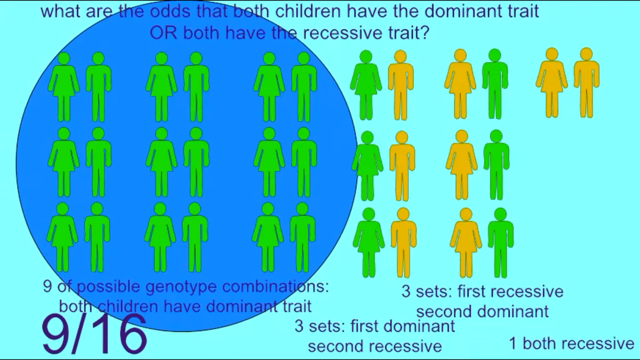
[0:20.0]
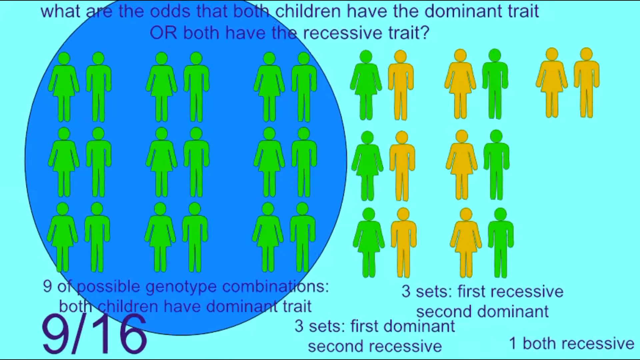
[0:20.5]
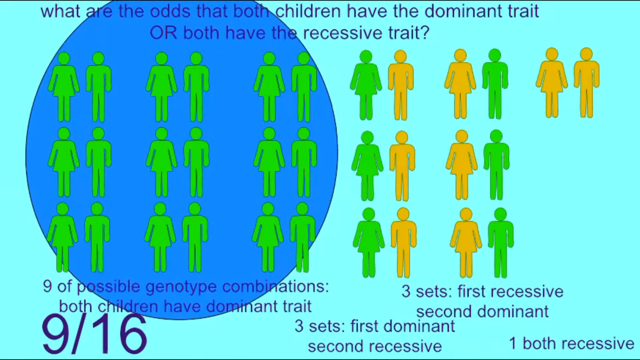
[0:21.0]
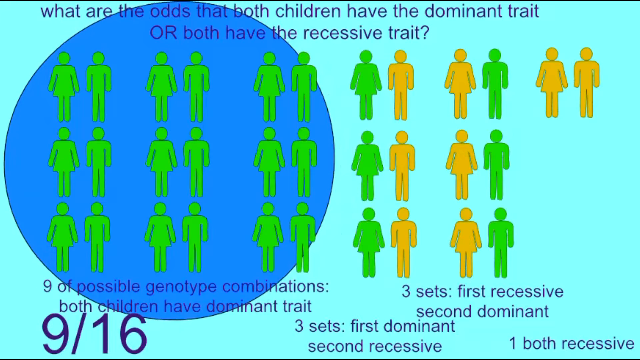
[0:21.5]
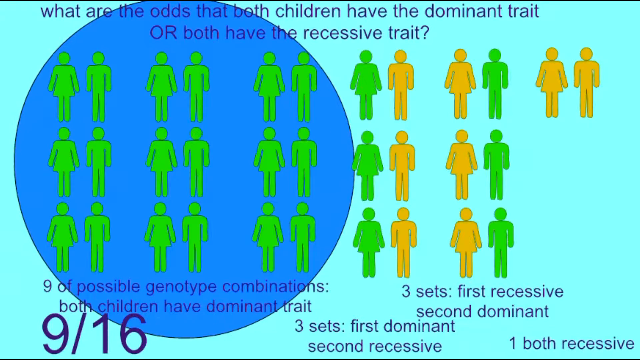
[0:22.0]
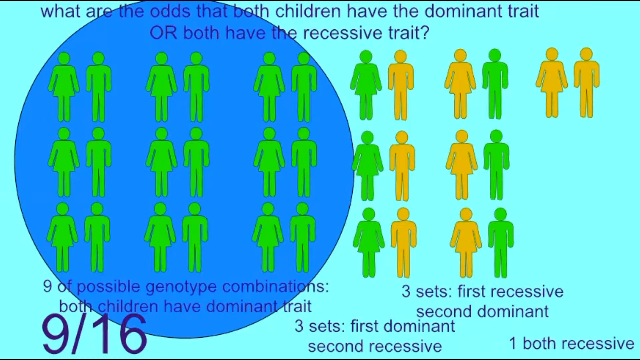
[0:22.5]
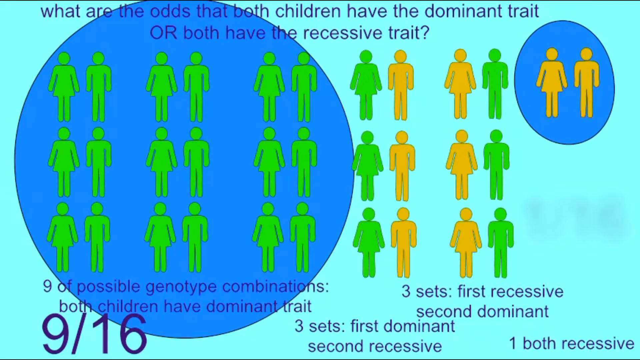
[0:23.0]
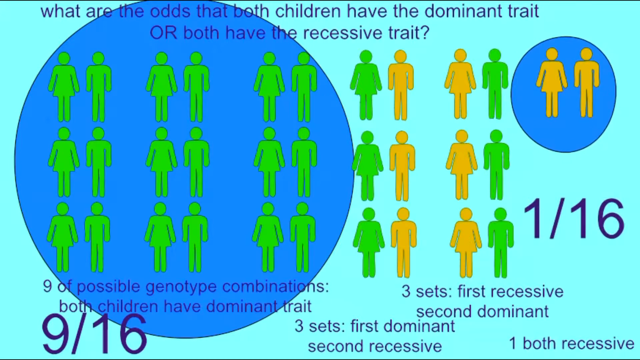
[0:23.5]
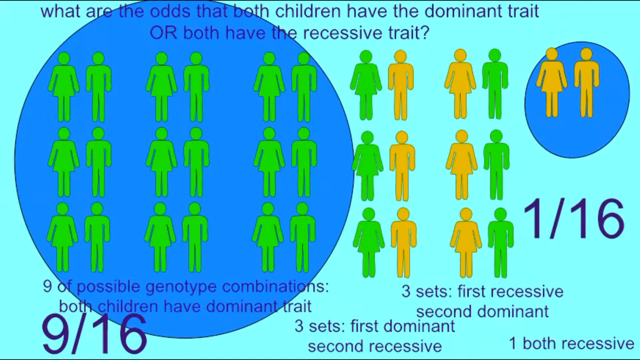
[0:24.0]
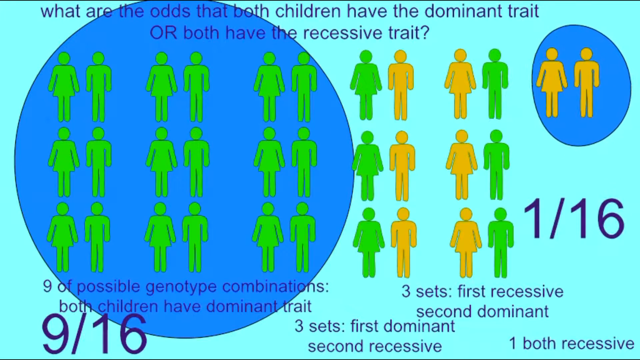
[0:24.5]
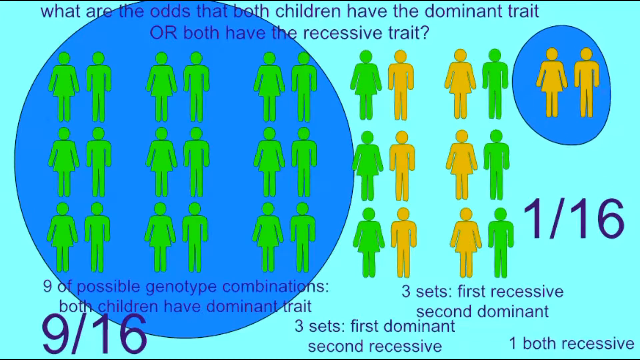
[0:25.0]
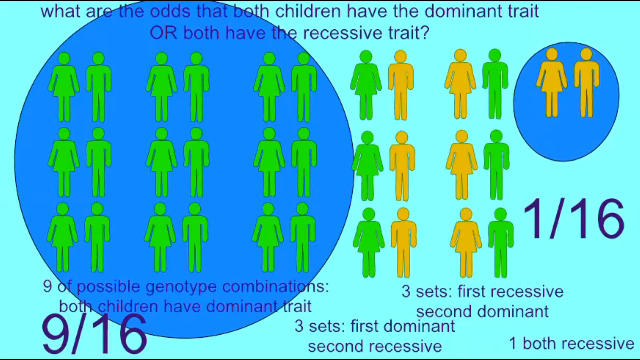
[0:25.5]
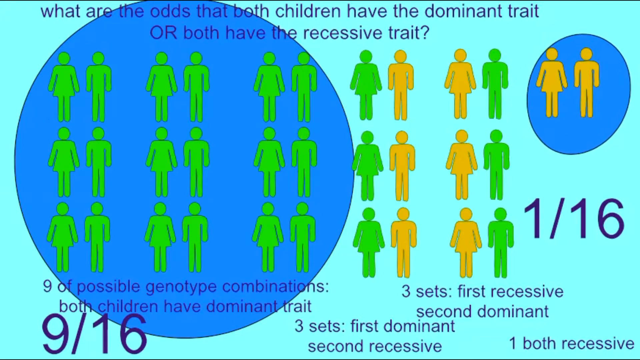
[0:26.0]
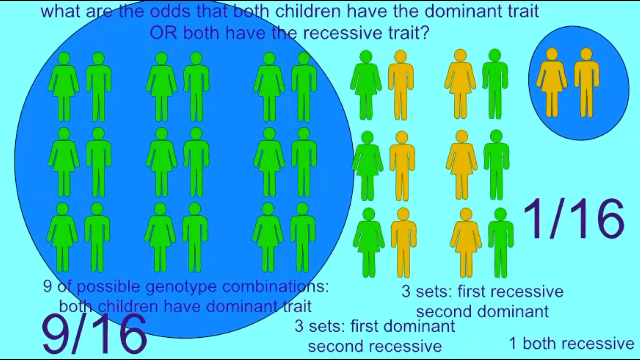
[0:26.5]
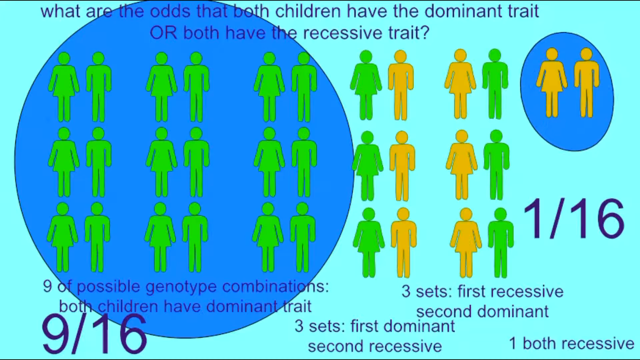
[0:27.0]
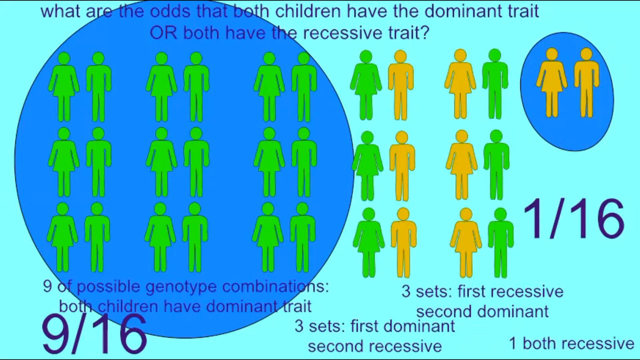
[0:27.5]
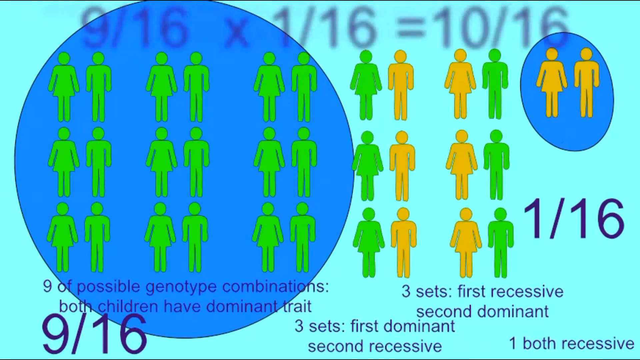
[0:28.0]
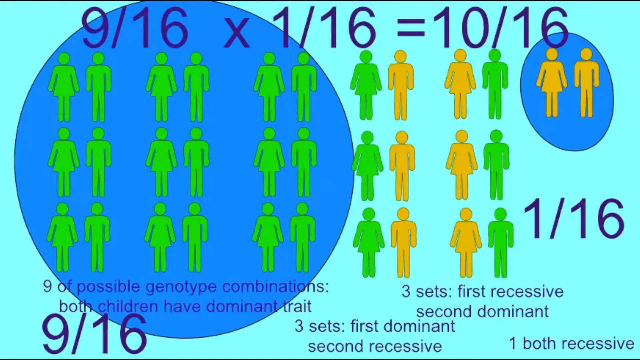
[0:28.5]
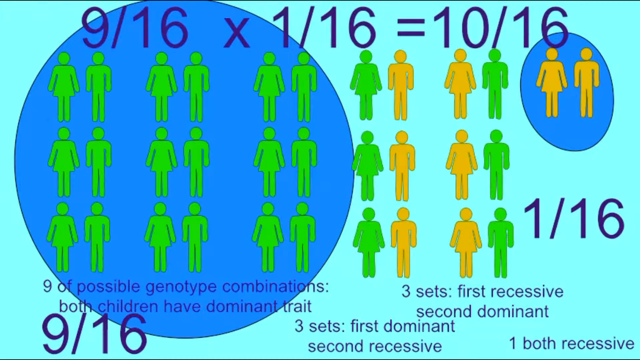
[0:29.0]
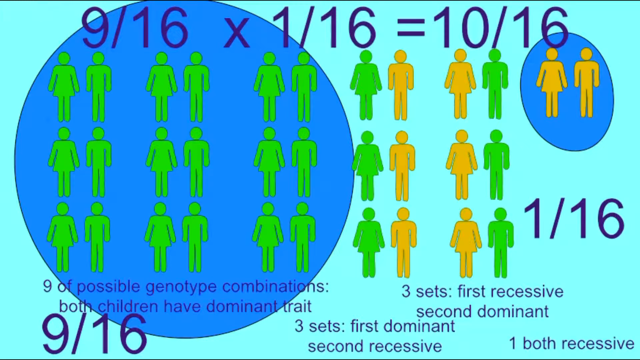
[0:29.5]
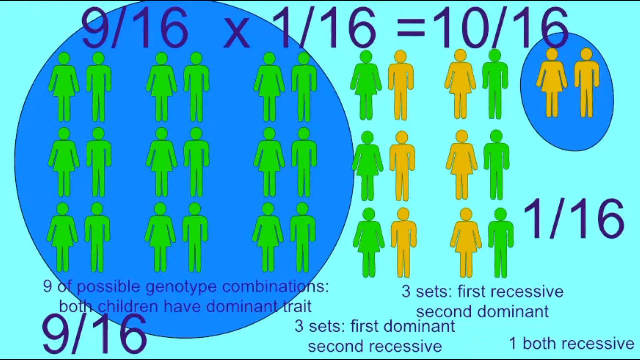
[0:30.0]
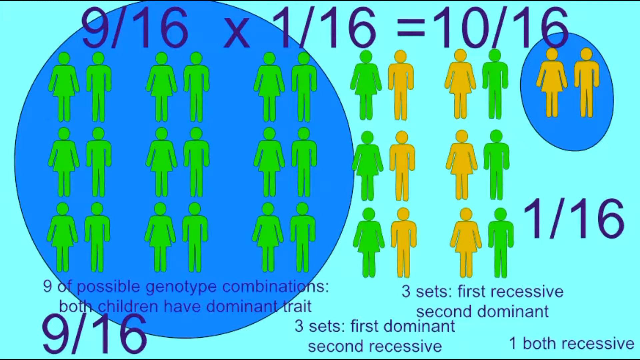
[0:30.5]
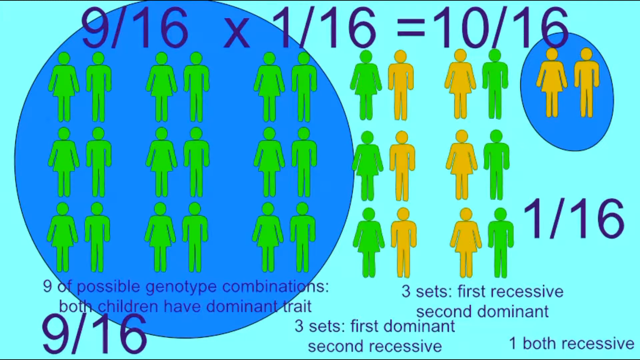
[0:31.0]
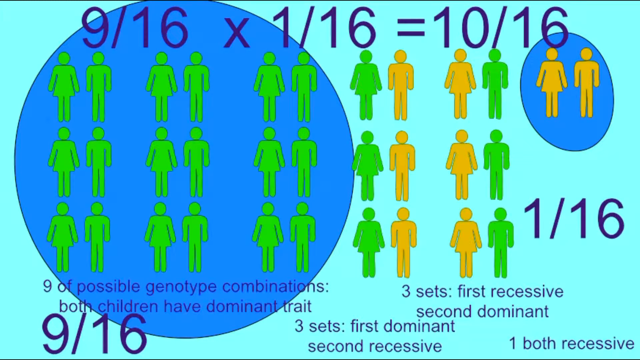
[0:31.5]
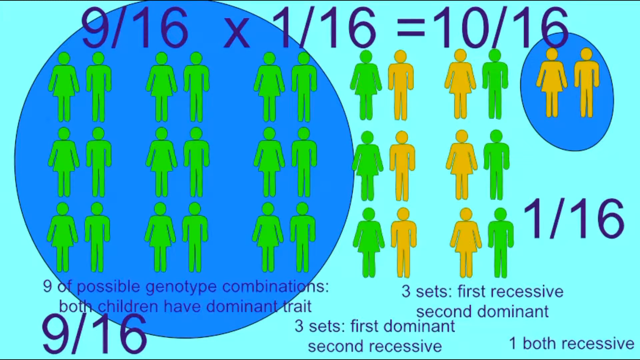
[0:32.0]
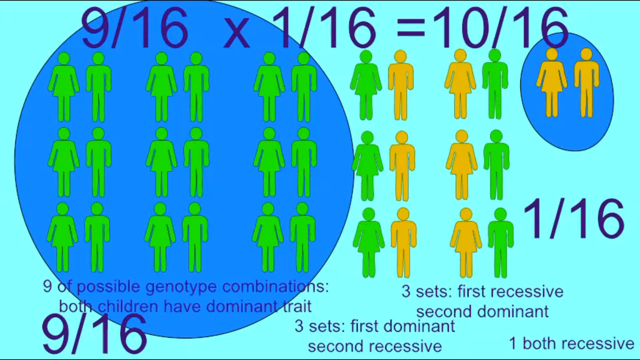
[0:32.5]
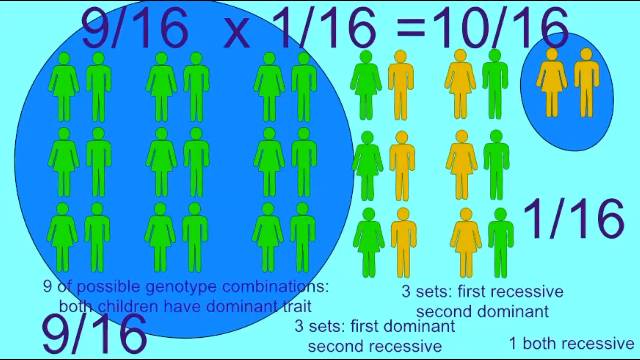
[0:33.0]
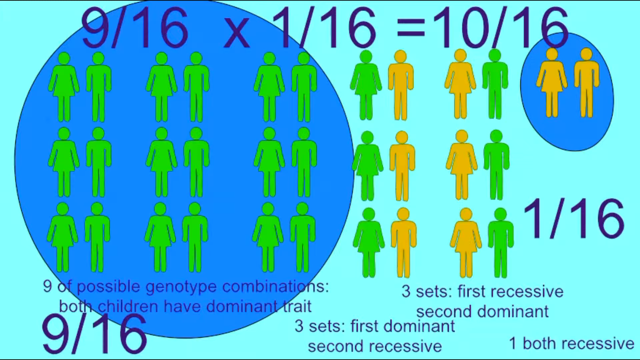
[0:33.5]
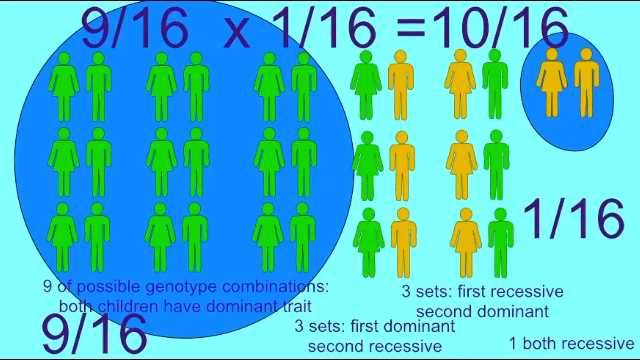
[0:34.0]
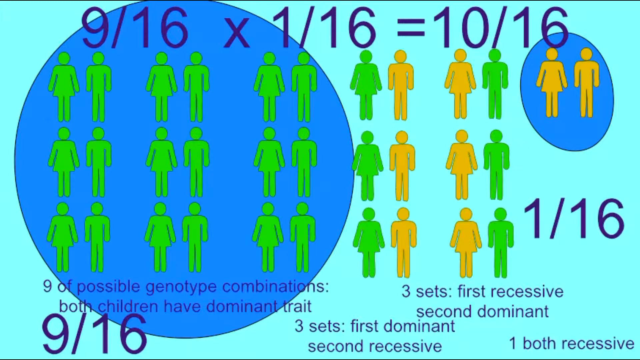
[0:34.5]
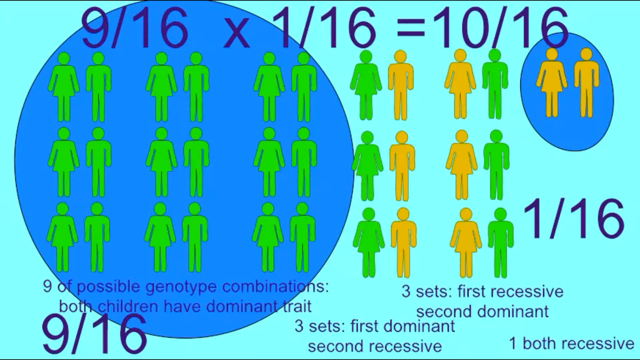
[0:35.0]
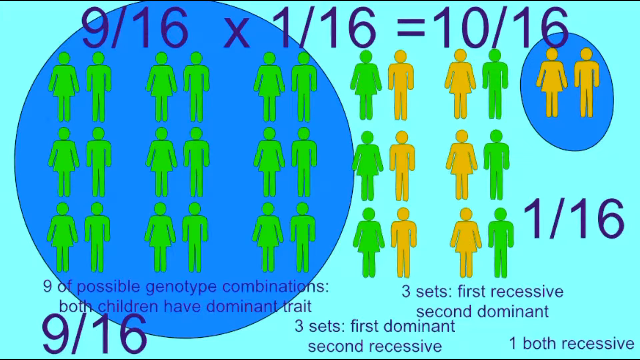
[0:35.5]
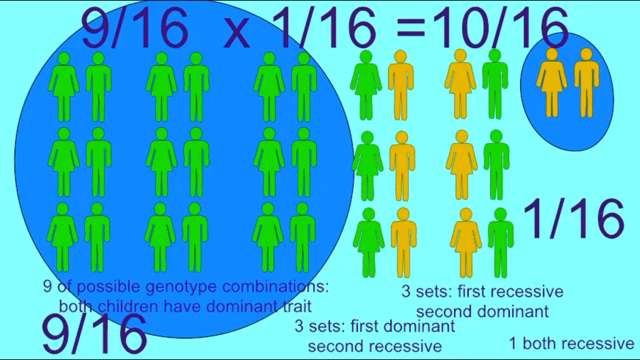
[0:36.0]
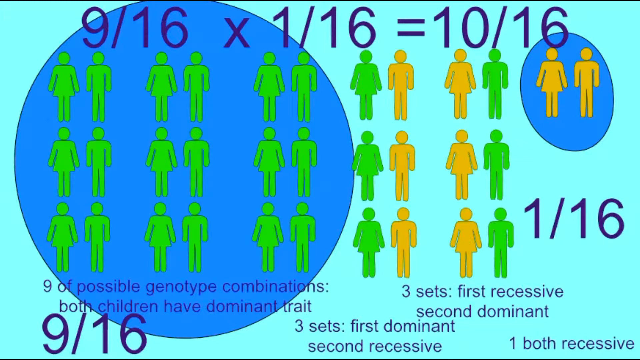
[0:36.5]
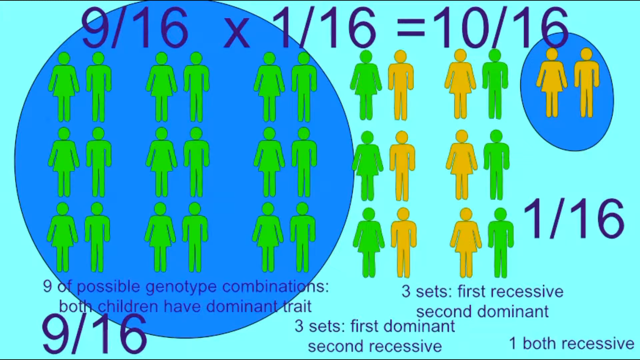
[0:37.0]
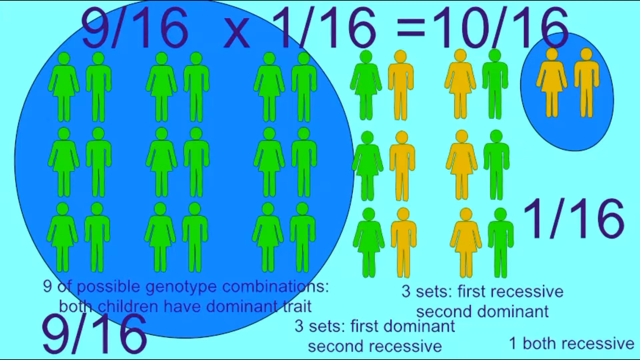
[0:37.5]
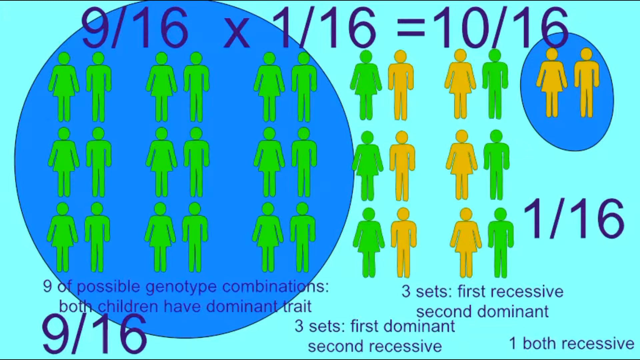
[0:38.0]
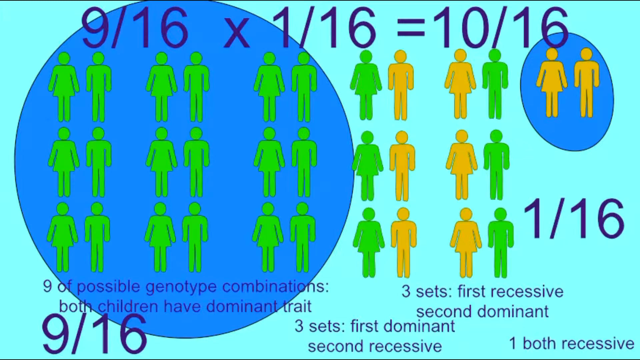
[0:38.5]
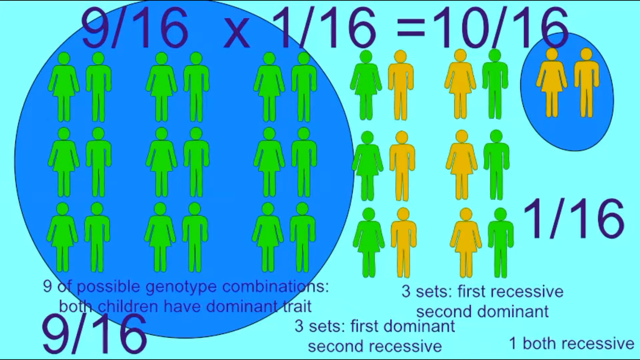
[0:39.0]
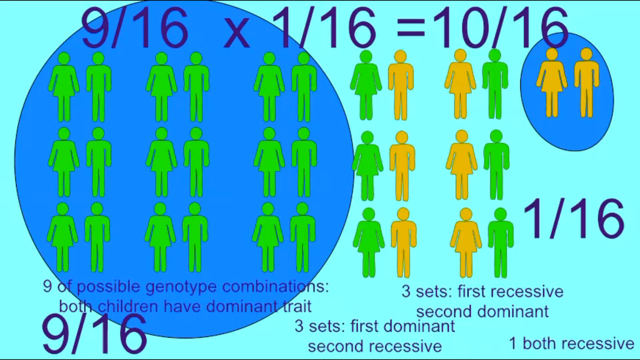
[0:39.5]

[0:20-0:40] The big group of nine possible genotypic combinations is circled. There is 9 out of 16 in the bottom left and 1 out of 16 in the top right, and the fractions are put together with the multiplication done to show 10 out of 16 chances that the children are either fully dominant or fully recessive. All the greens and all the yellows are circled so they look separate. No humans are present; the figures are just stick figures.